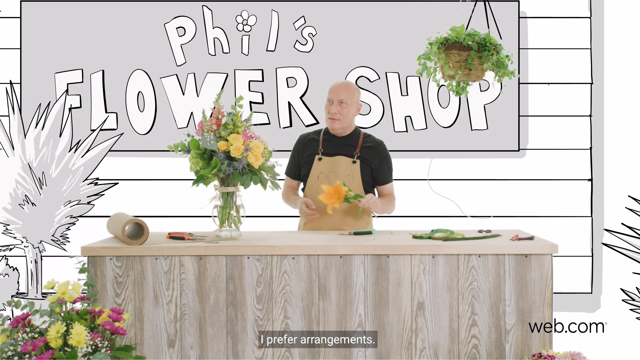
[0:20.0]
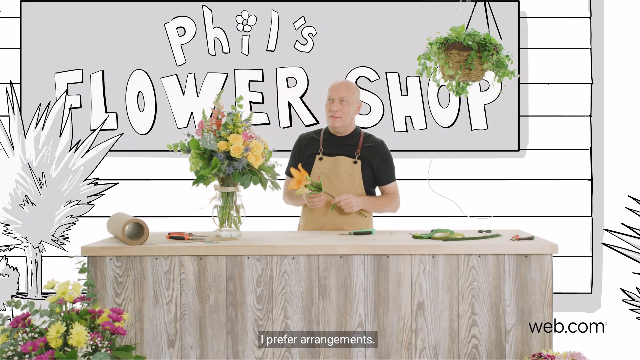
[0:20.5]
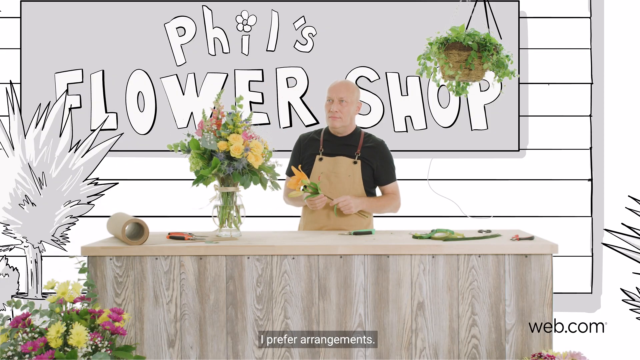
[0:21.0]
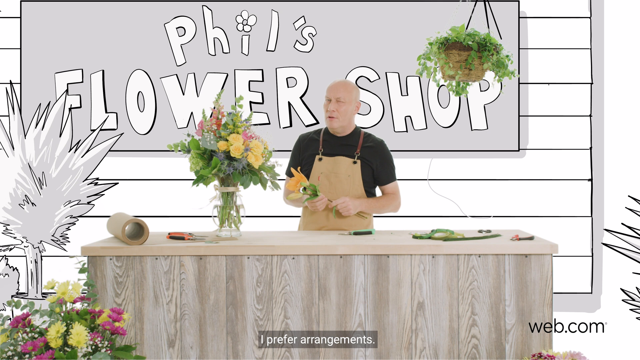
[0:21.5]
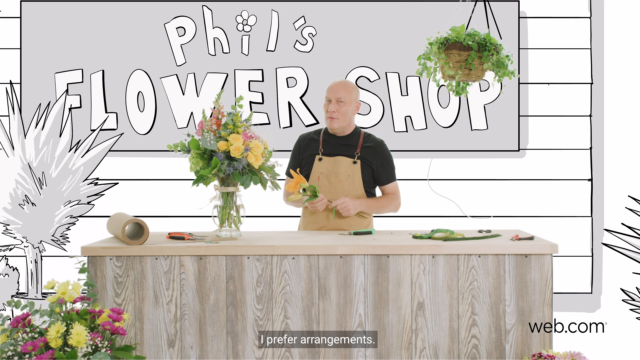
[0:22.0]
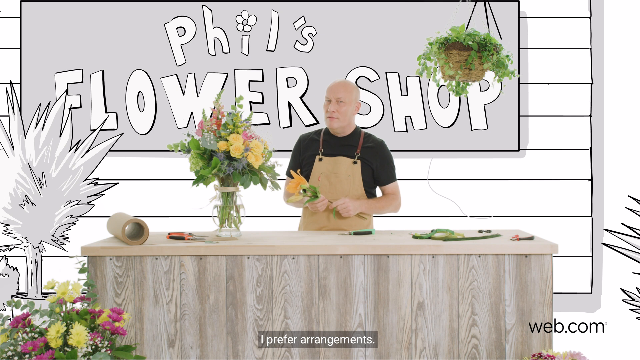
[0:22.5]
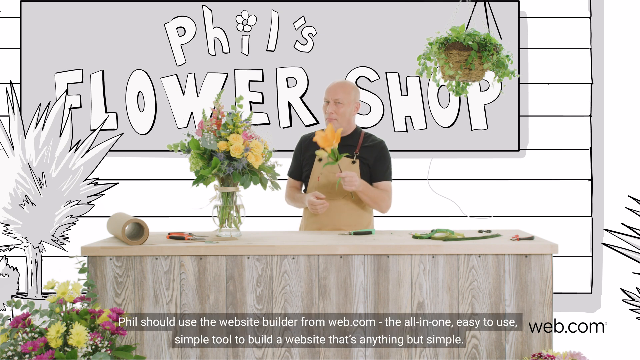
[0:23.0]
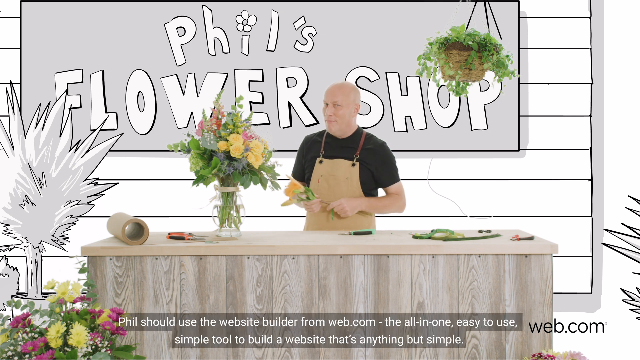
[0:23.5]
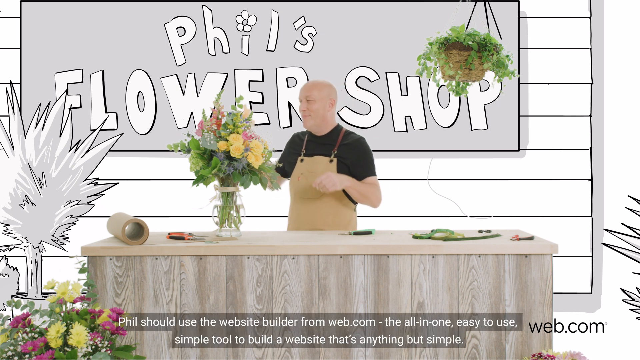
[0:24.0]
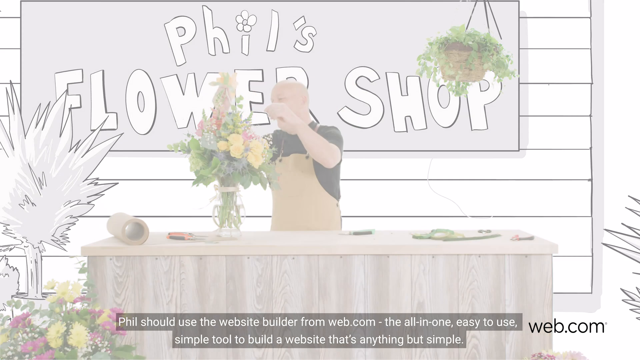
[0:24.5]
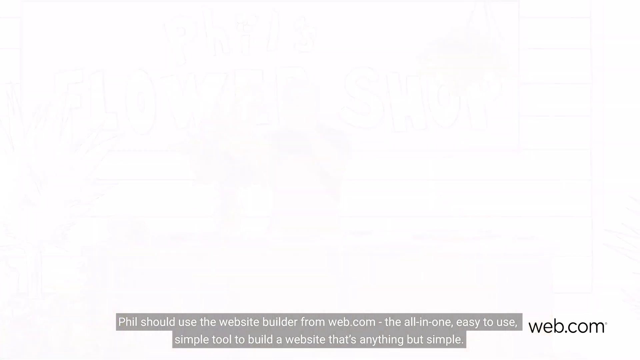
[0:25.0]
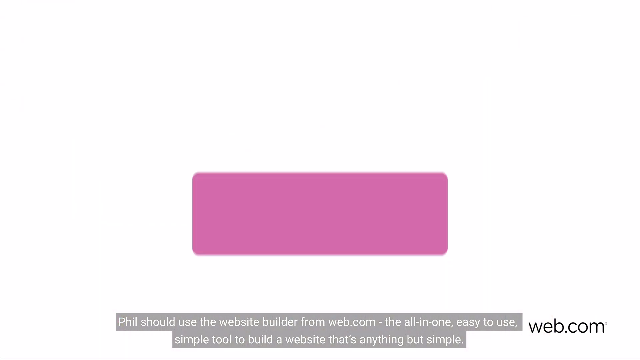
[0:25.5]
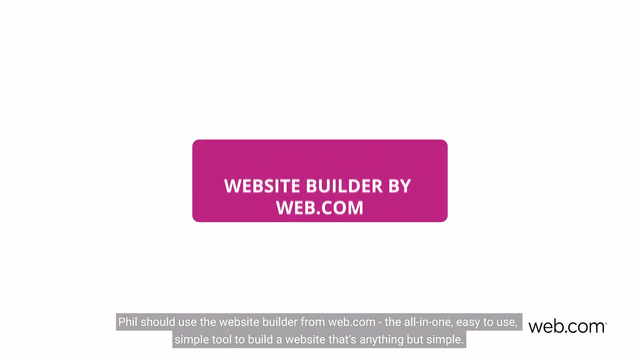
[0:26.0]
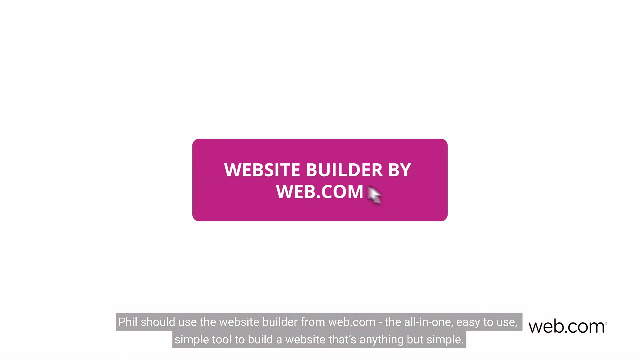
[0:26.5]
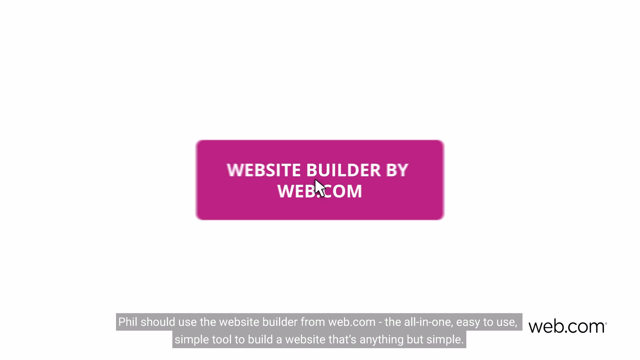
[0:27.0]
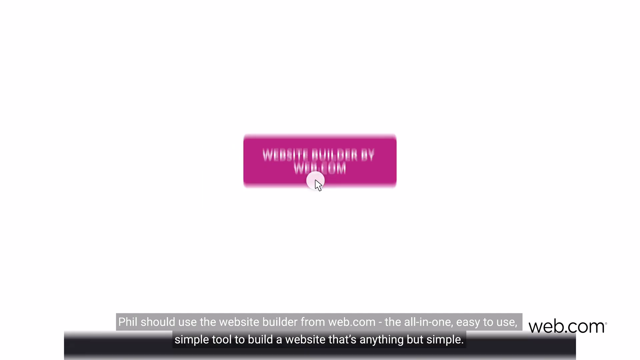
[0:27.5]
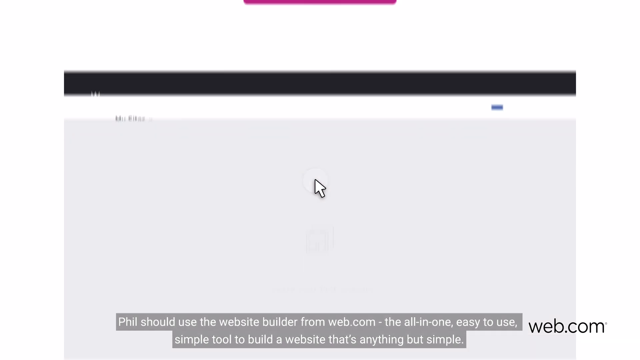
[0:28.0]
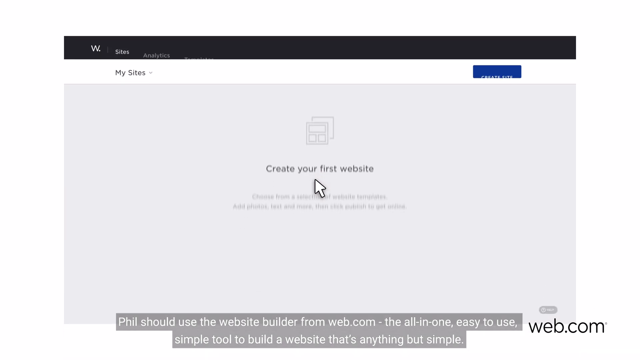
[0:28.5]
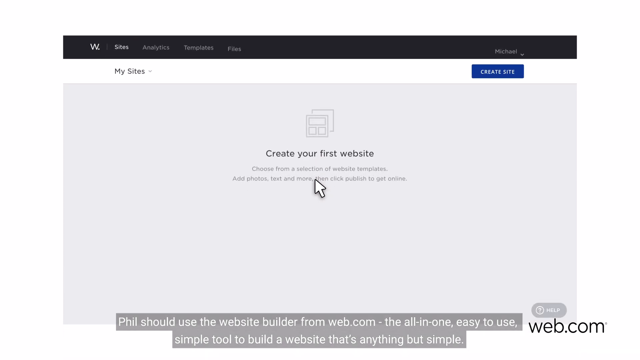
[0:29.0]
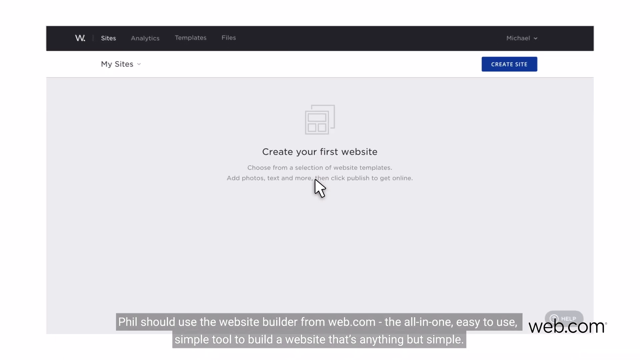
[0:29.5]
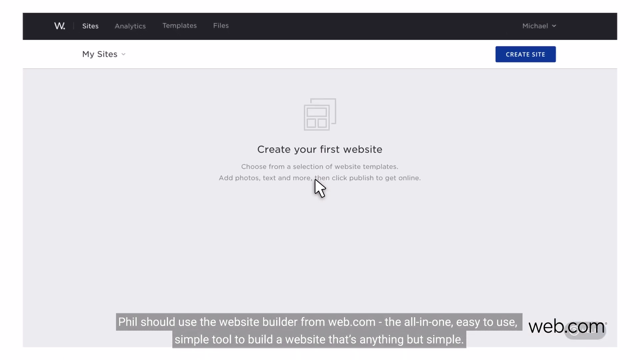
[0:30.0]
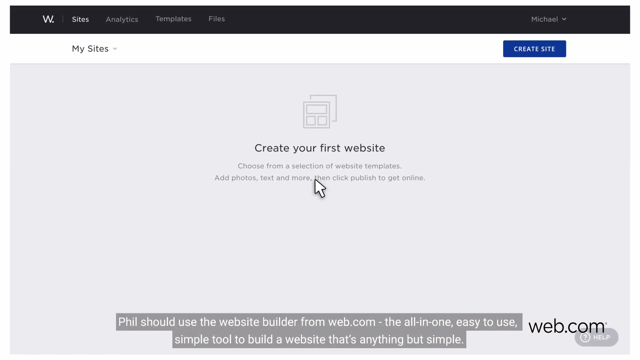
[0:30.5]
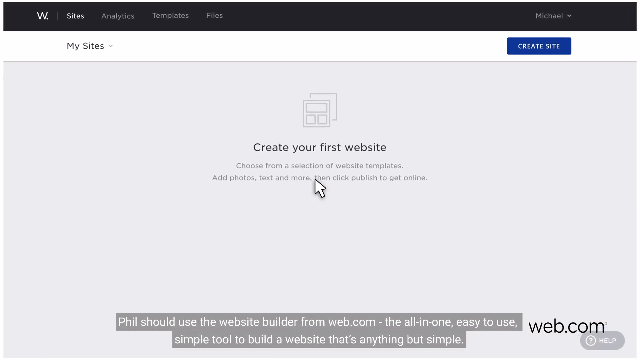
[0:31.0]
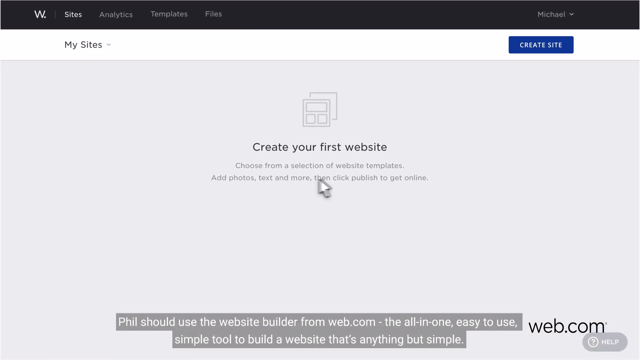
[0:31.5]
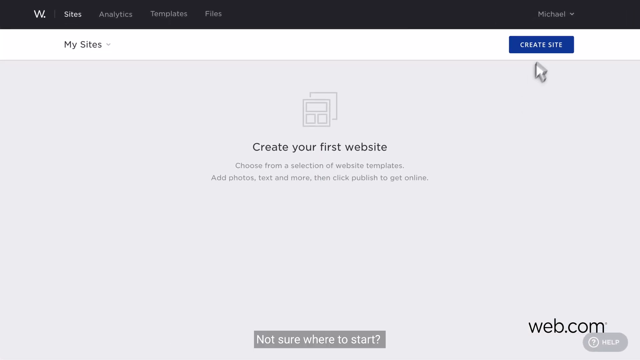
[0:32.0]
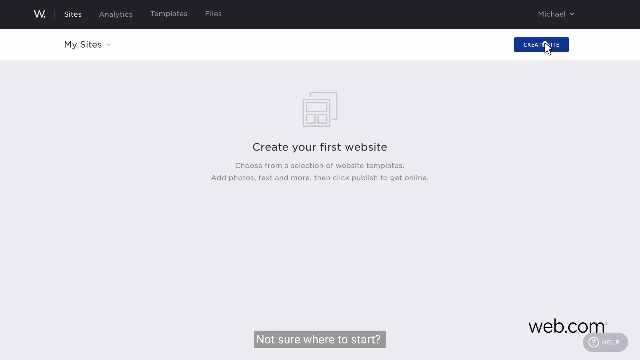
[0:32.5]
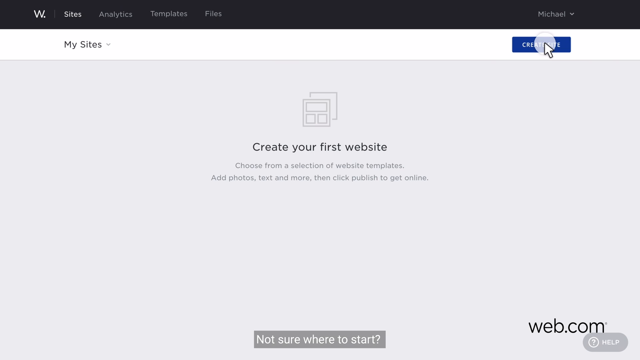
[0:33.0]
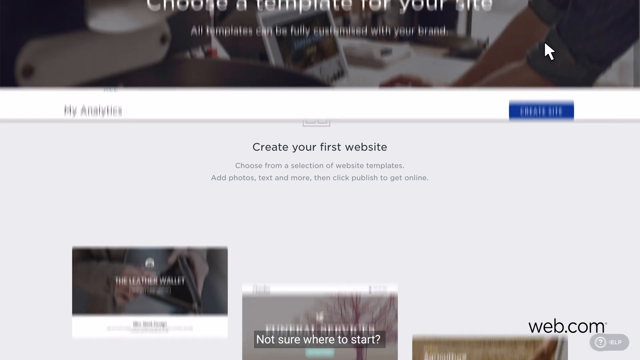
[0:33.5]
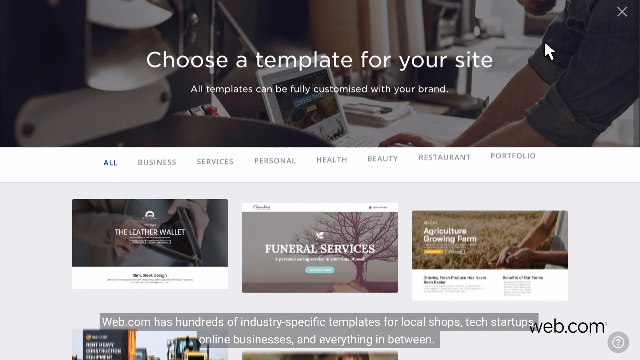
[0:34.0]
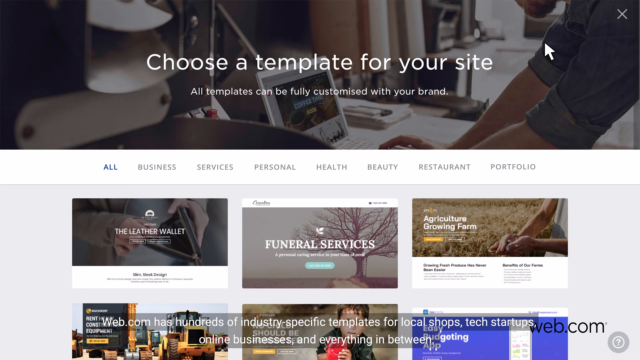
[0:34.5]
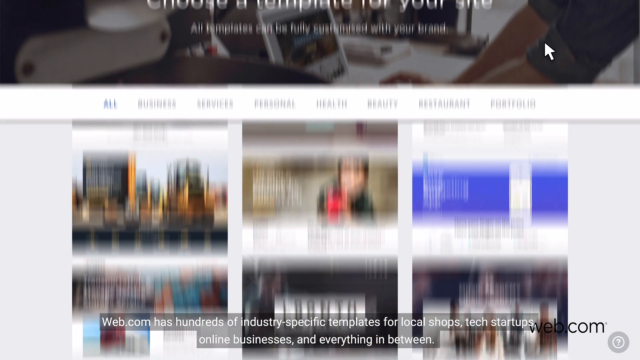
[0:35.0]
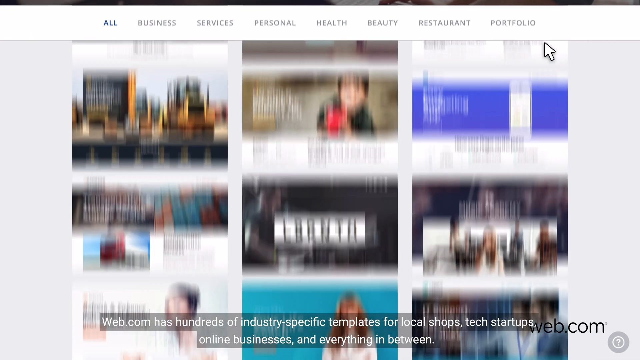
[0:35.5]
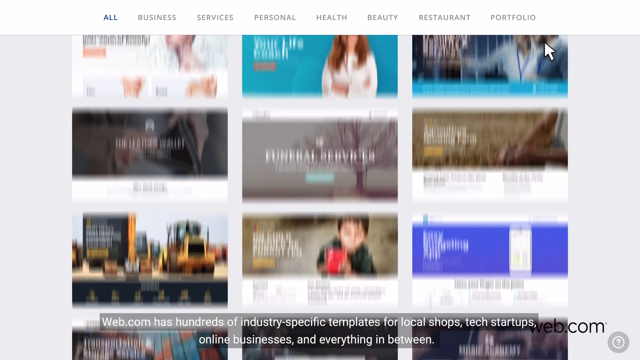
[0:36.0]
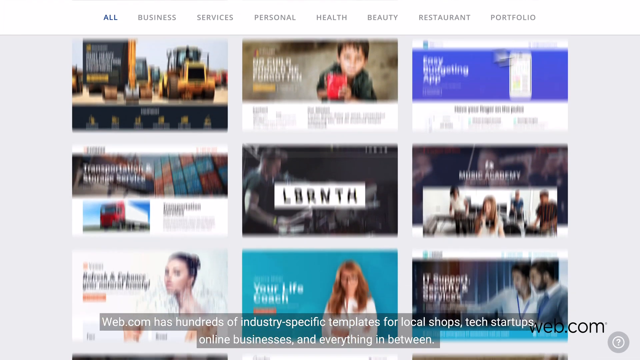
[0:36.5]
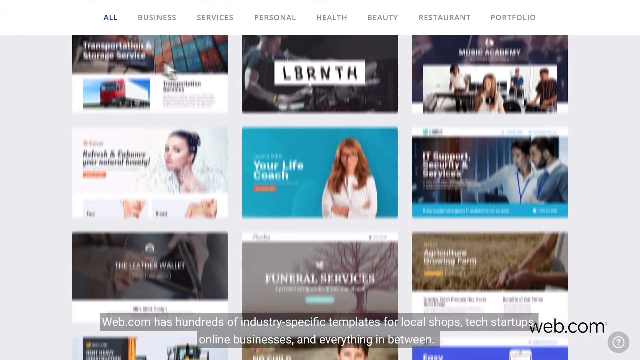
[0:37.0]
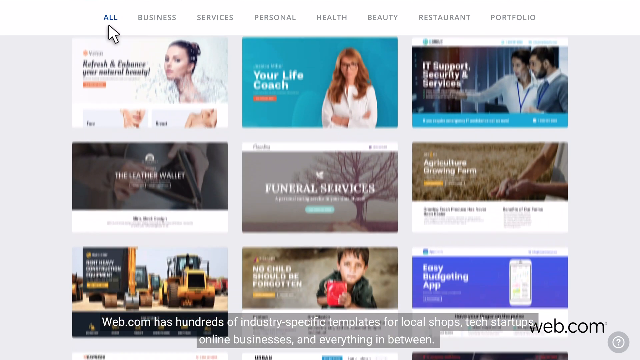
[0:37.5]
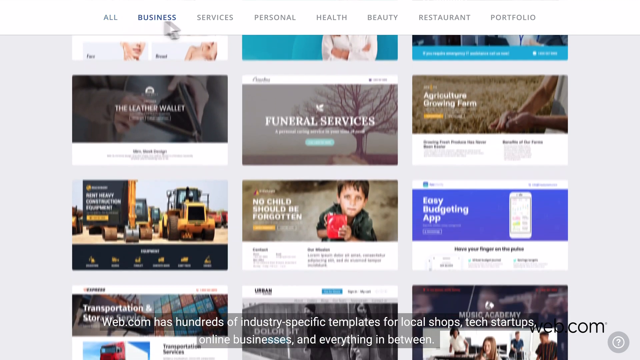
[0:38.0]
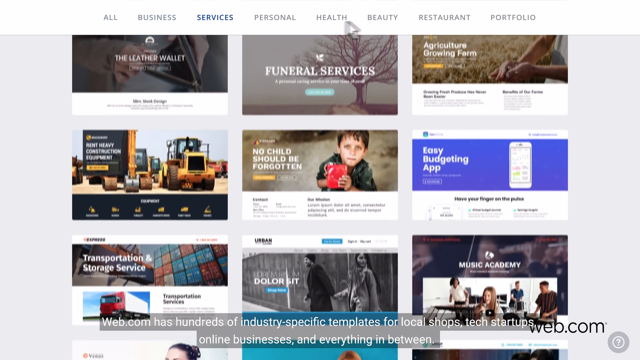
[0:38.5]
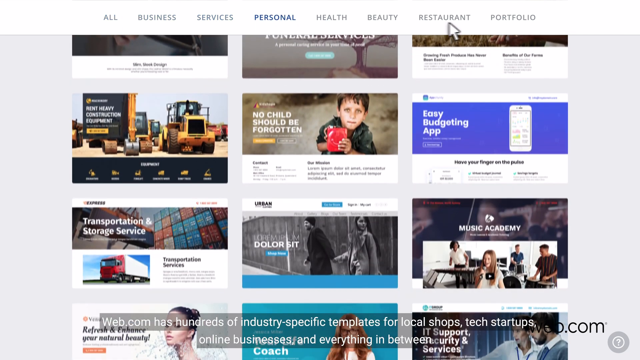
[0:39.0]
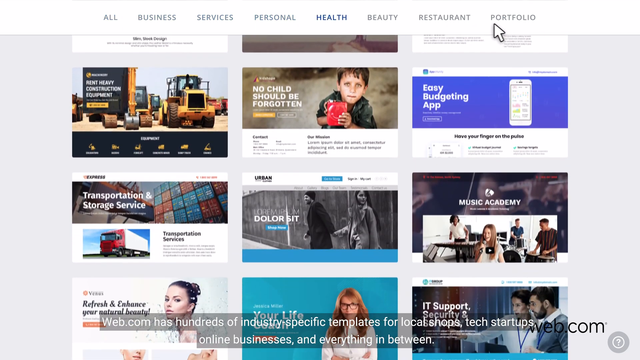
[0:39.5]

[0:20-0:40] The man is still in the flower shop, with the same cartoon-style background and the photo-style counter with flowers. He seems to be arranging the flowers, looking into the camera and speaking as he adds one flower to the flower arrangement on the countertop. Next, a light purple text block with white characters reading "website builded by web.com" appears against a white background. A mouse pointer clicks on the text box, and a window appears from what looks to be a website, probably web.com. Its user interface says "create your first website" with text underneath that is too small to read. A button at the top right says "create site", the top left says "my sites", and there is a menu at the top. The pointer clicks on "create site", and an overview of what appear to be templates is shown, with a menu reading "all business services, personal health, beauty, restaurant and portfolio".